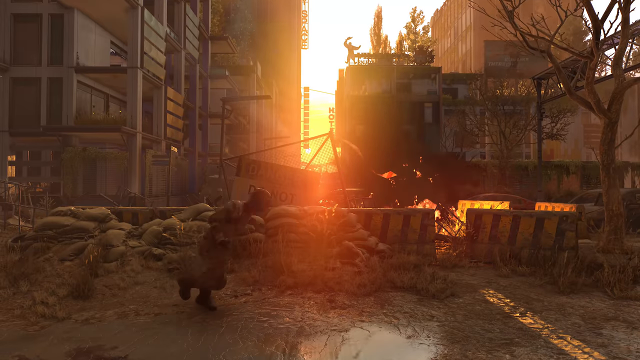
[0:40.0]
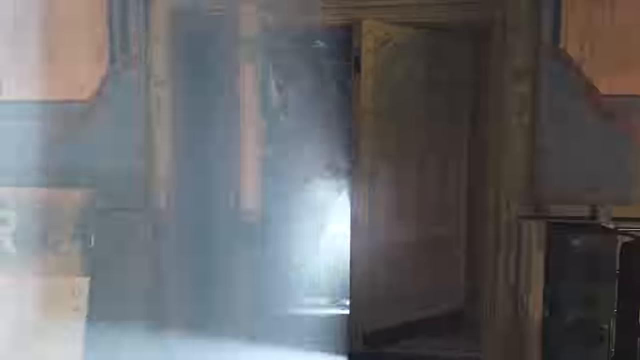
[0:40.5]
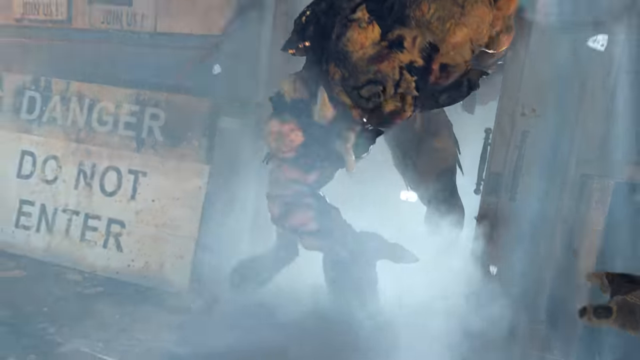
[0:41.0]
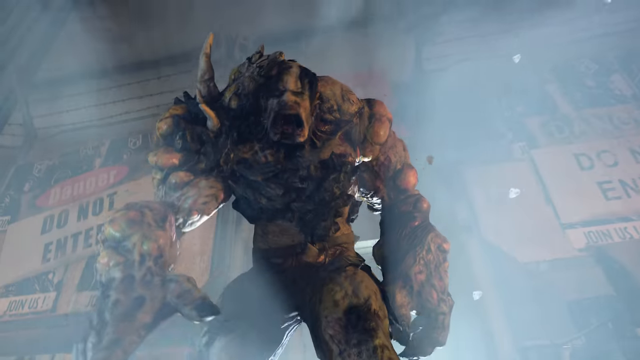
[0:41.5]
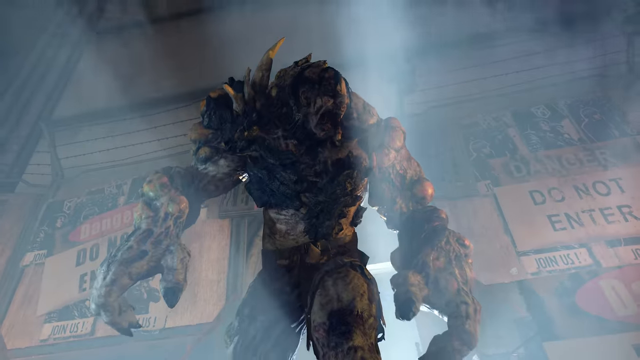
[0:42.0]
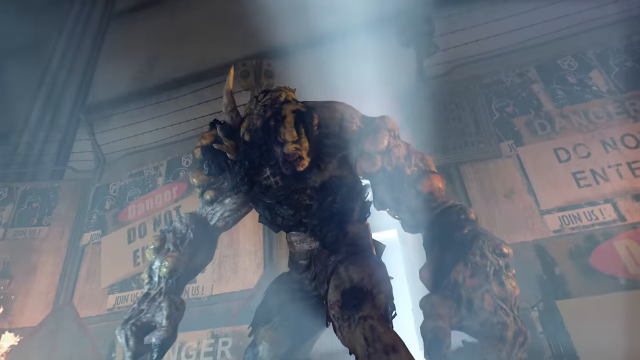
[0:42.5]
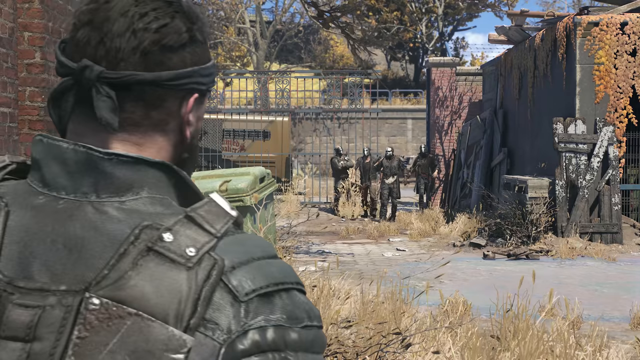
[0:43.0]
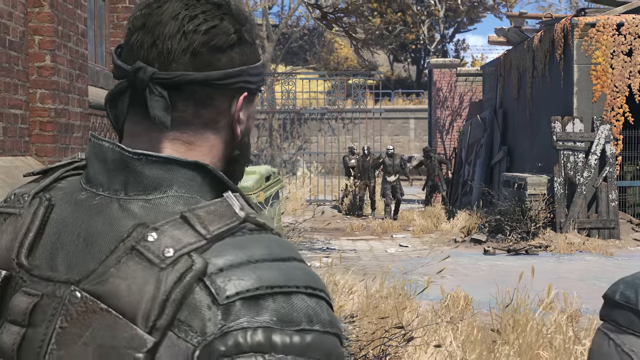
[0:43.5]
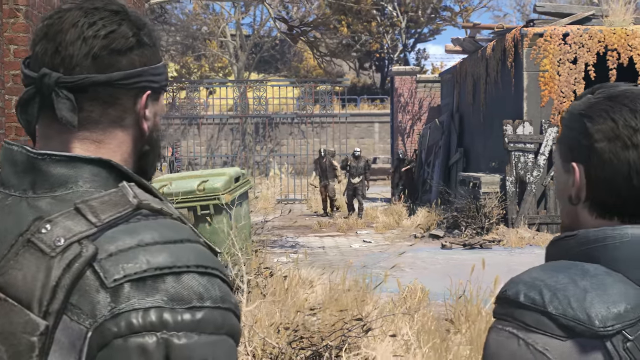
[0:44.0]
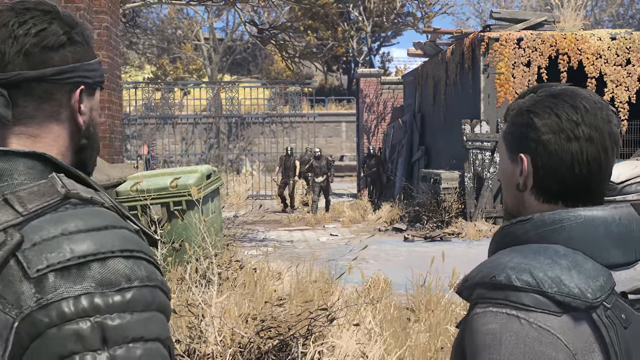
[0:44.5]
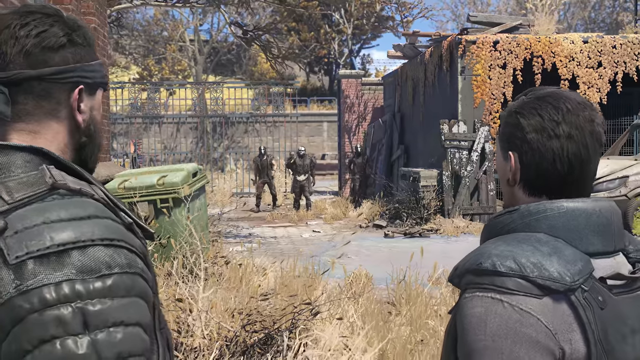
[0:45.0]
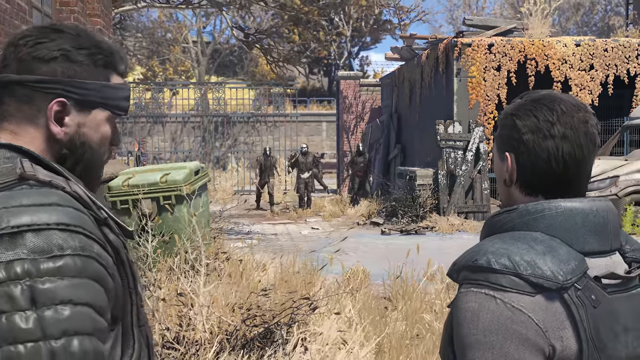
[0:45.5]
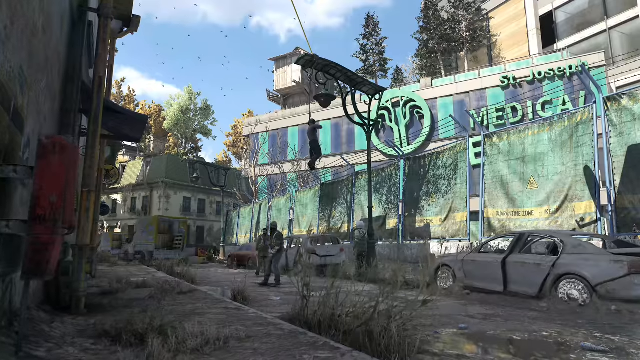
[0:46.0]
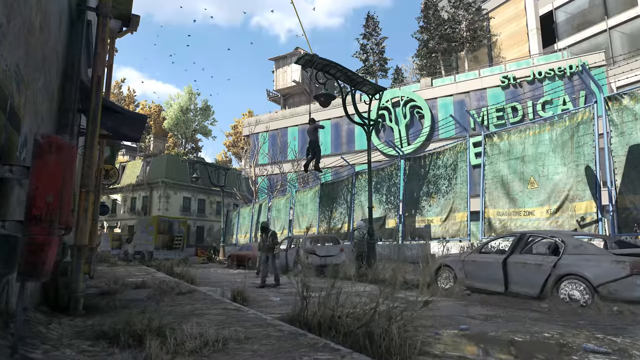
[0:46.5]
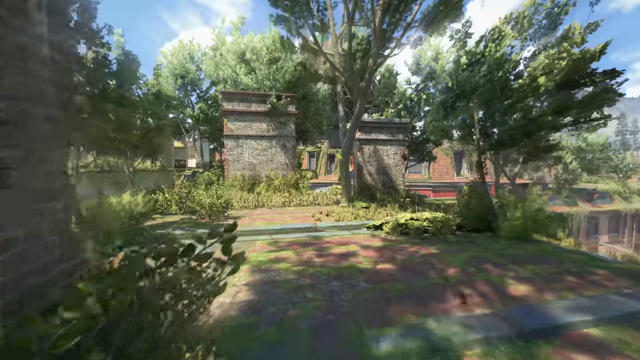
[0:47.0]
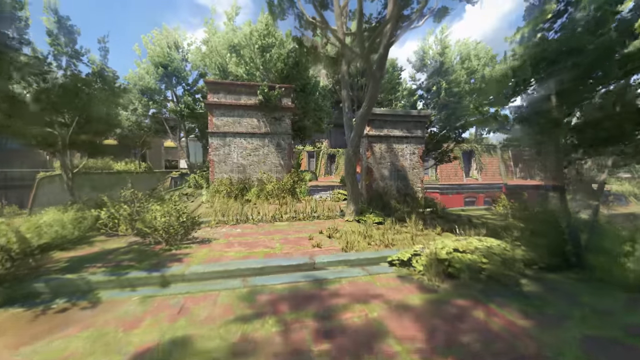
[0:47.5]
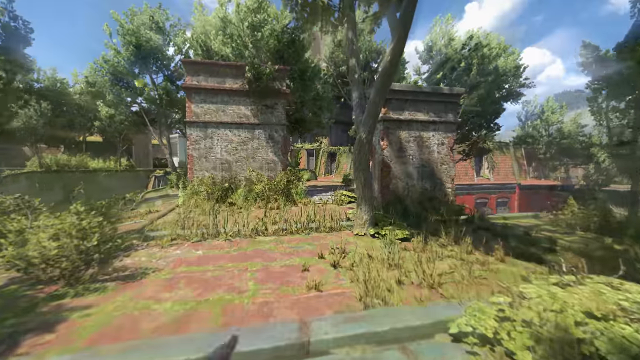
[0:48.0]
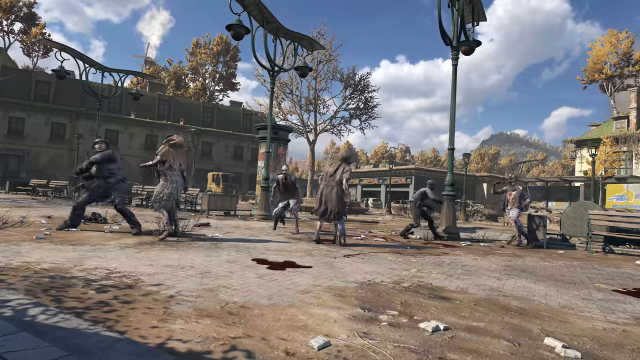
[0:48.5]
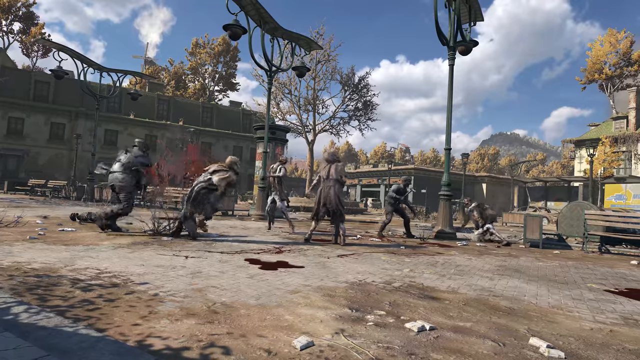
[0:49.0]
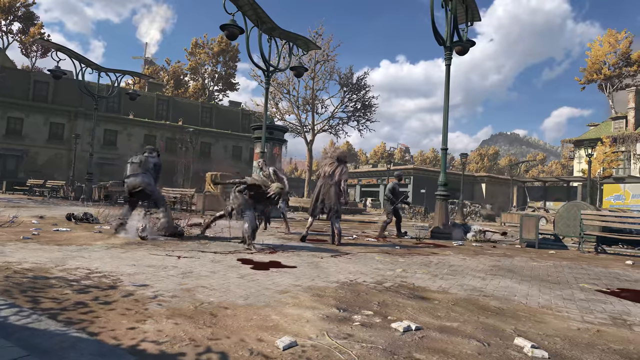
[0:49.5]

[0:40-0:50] Possibly zombies are chasing, and then some type of monster appears with a little head and a humongous body, looking like an evil hulk. The video fast forwards to a group of people facing each other. Text says "St. Joseph Medical," apparently a hospital. Abandoned cars are visible, and someone is hanging from a light pole, seemingly fighting, legs swinging; the one hanging appears to be a zombie. Next is what seems to have once been a park with lights. Zombies wearing dresses come toward a person, who seems to be defending themselves against the group of zombies near them. When the zombies are first shown, one of them is getting hit as the person swings and hits it.